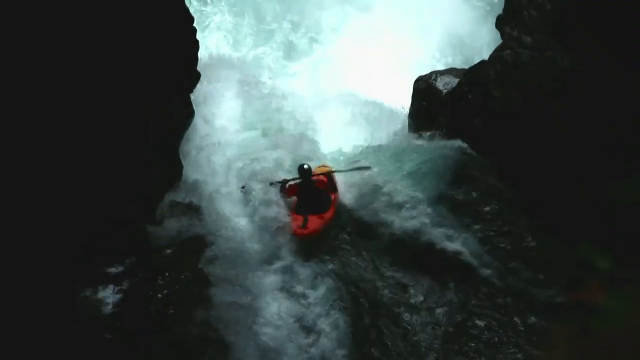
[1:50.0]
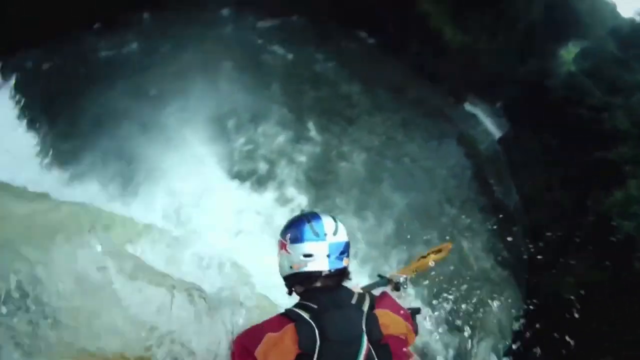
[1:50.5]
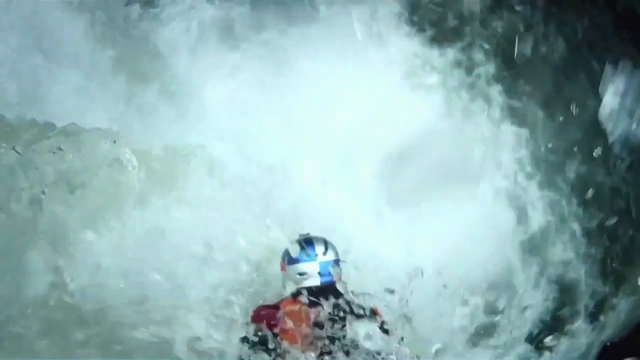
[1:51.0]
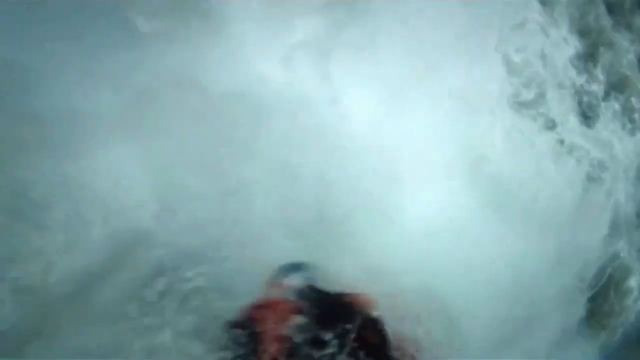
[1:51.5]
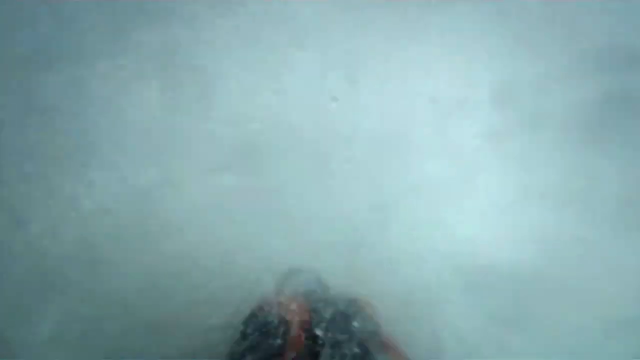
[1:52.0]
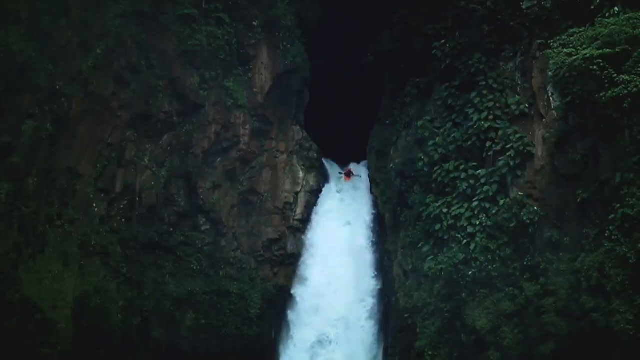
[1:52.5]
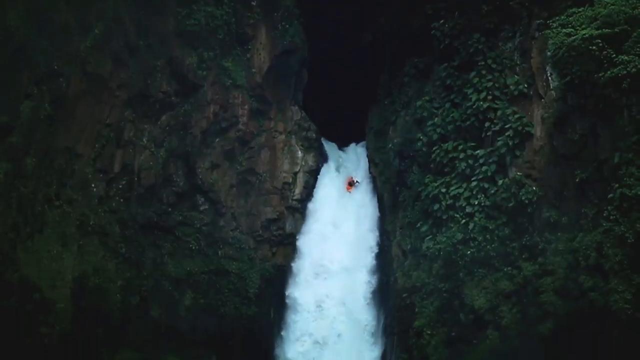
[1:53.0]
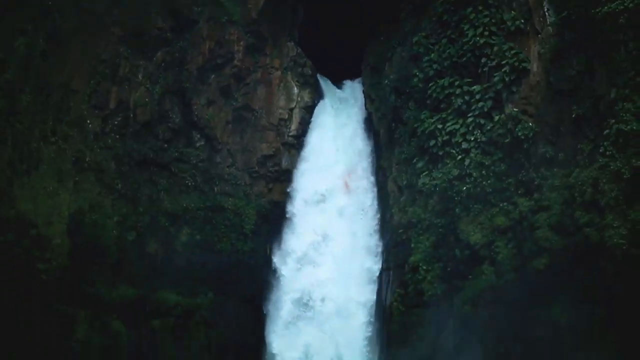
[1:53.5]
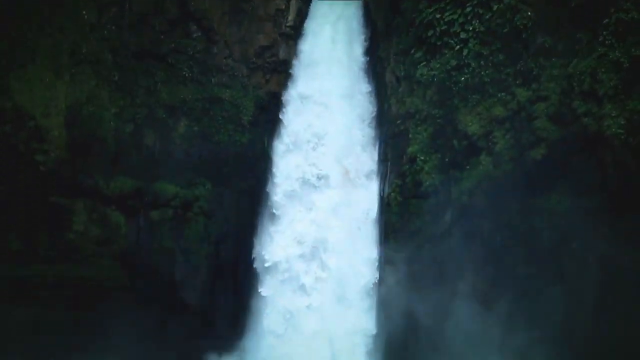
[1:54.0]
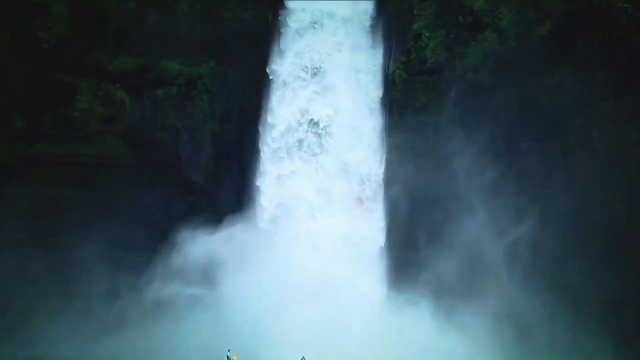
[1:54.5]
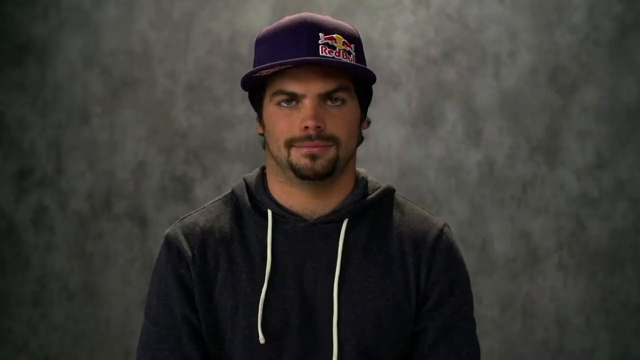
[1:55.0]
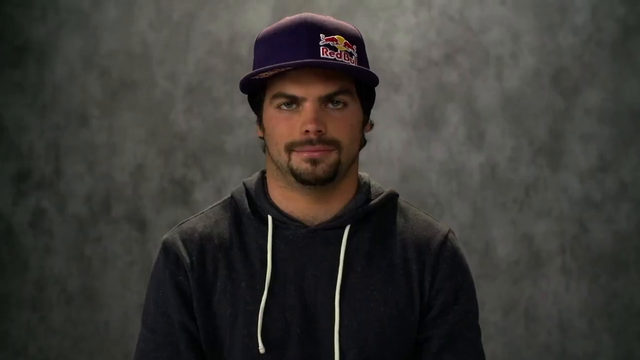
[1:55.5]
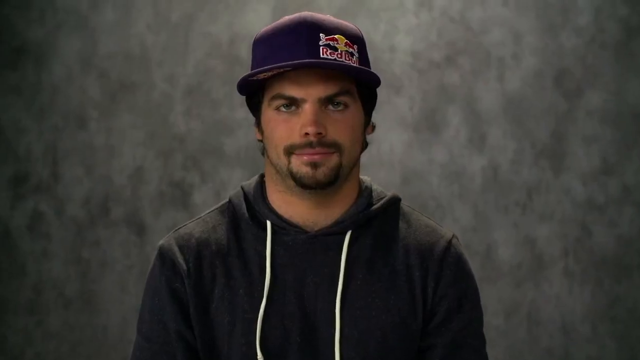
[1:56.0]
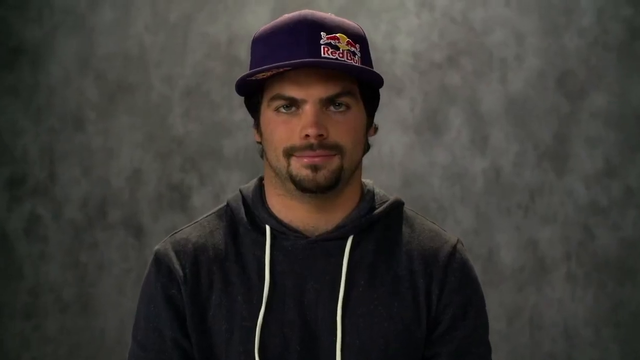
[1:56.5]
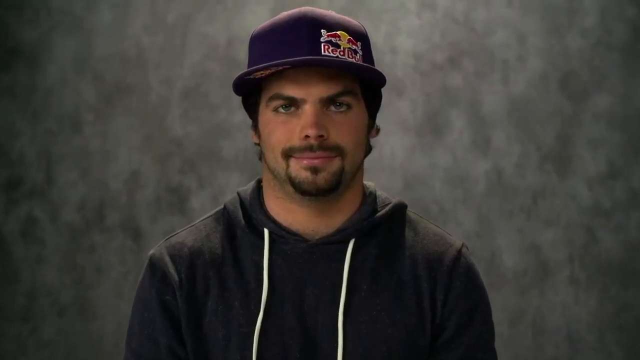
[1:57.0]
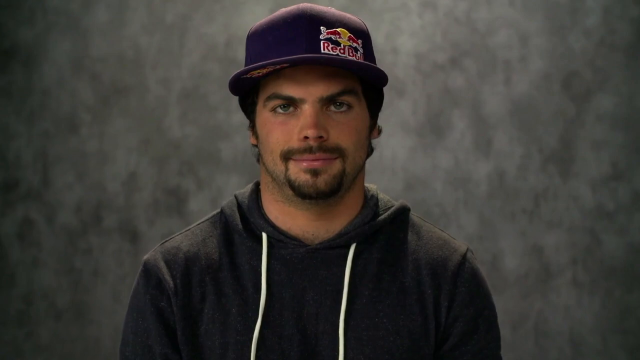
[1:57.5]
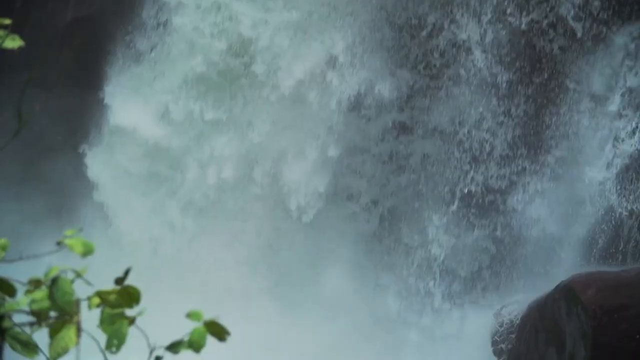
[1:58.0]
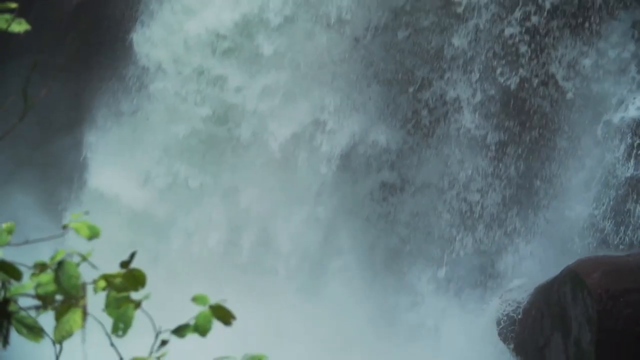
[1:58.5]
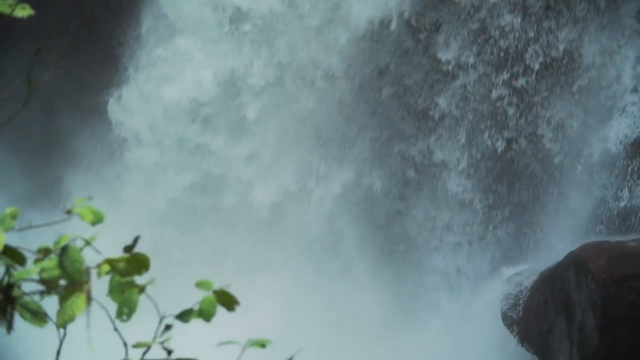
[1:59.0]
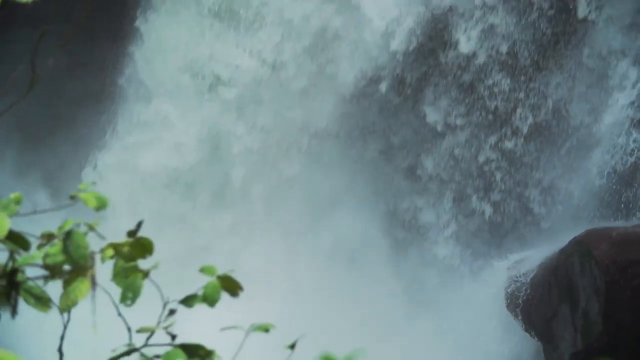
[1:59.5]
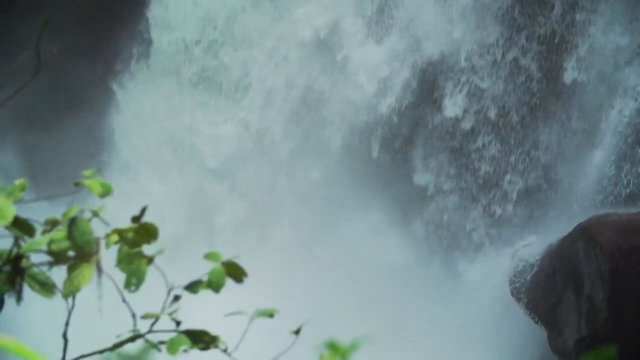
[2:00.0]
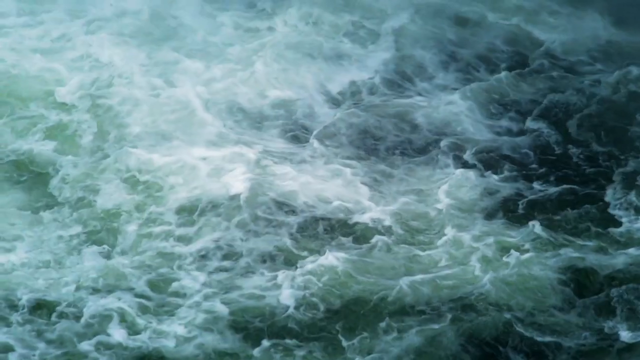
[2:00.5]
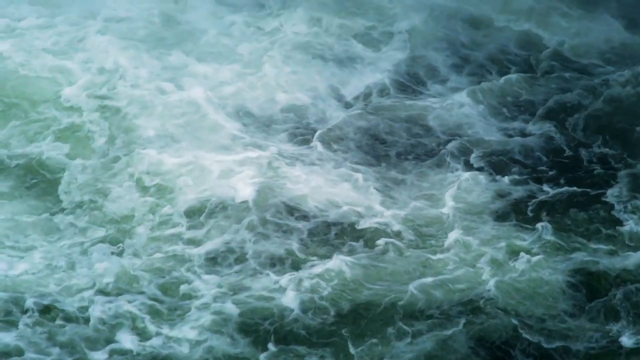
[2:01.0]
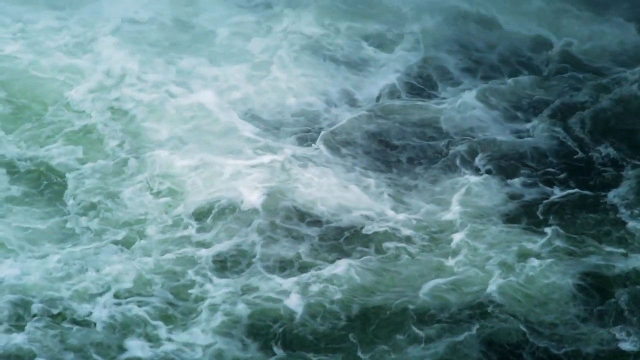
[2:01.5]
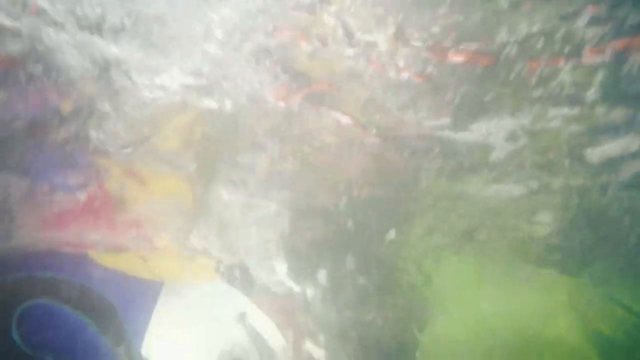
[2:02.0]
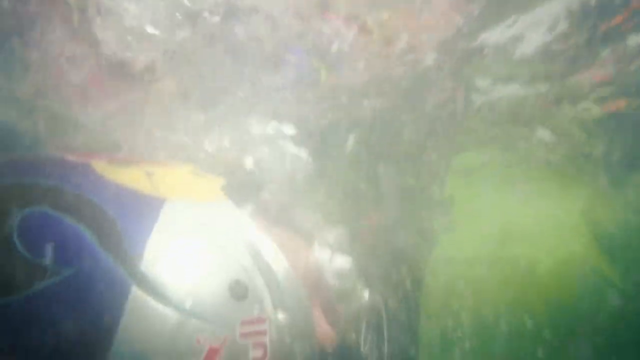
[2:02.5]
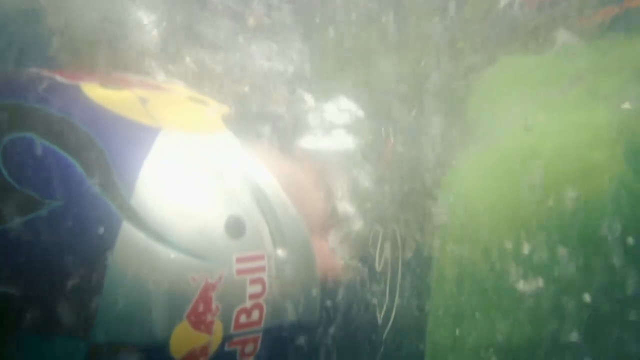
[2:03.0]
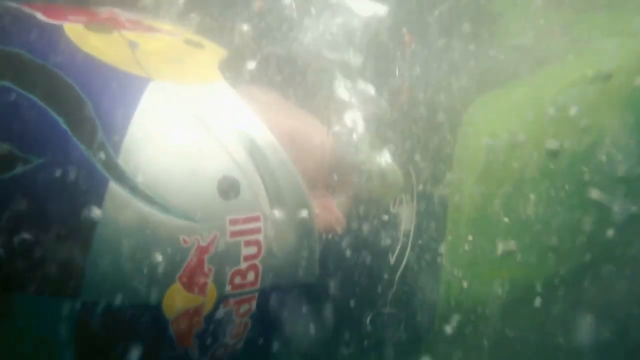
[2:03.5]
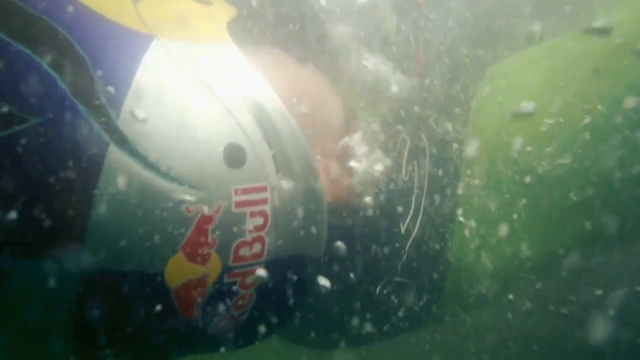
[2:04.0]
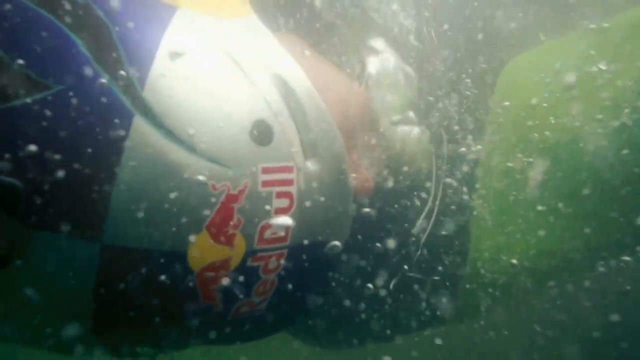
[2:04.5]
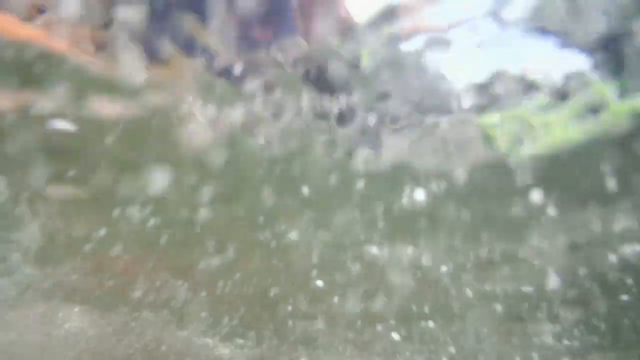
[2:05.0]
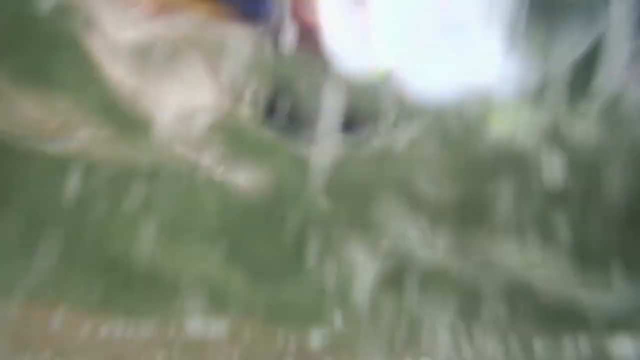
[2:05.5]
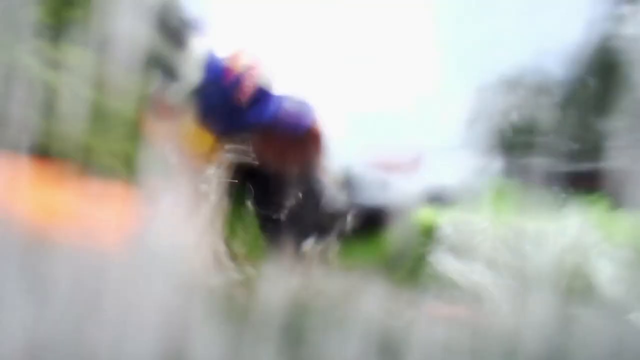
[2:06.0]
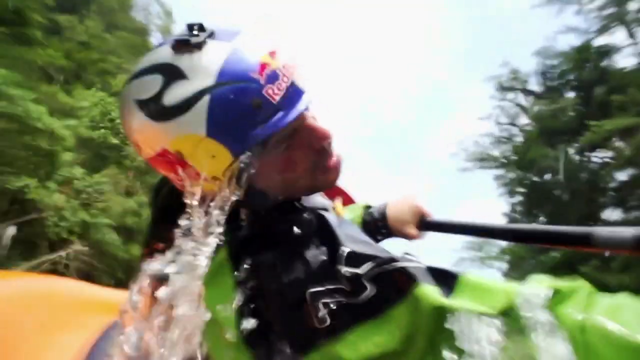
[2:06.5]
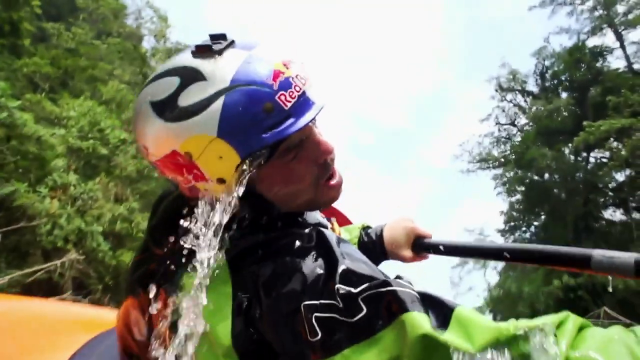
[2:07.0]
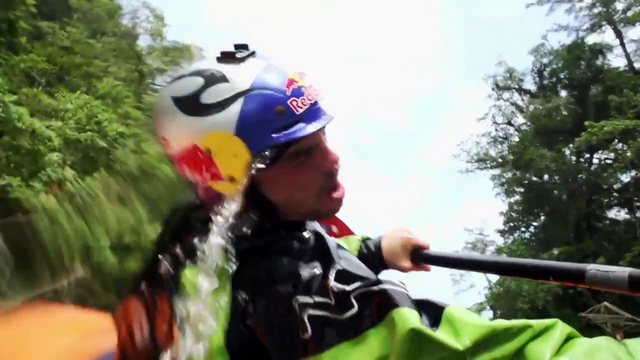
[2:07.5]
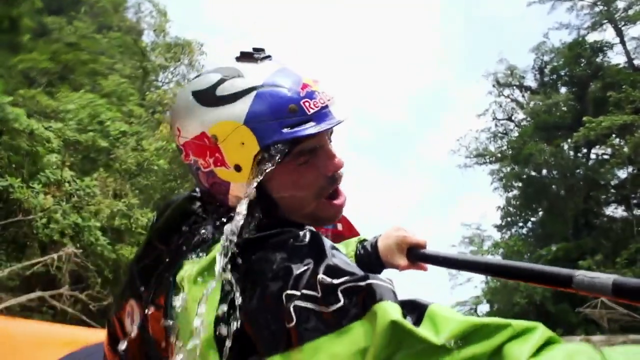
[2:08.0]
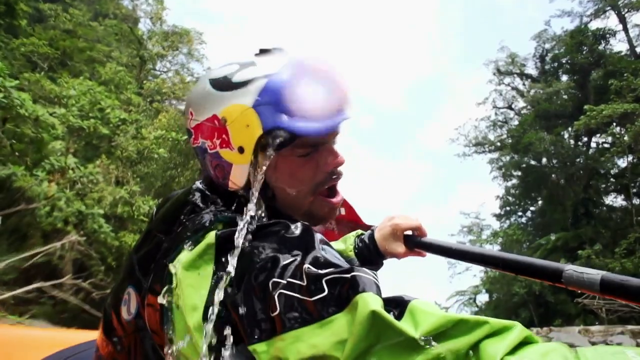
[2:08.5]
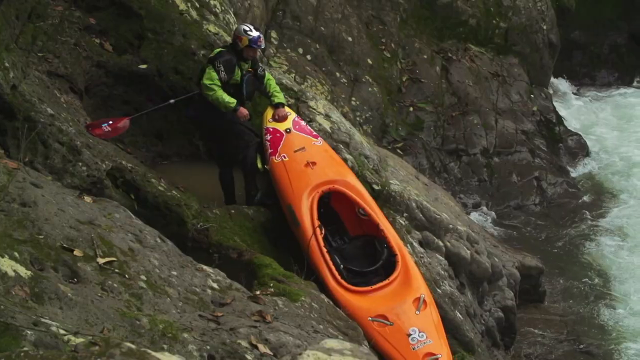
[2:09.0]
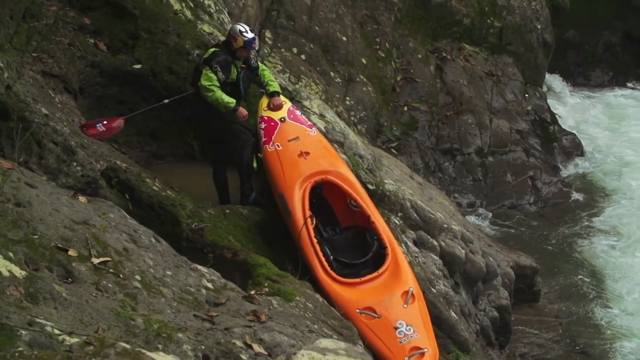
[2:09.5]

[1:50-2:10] Scenes from a kayaking adventure appear to have been filmed for Red Bull, with a Red Bull logo in the bottom right corner. In one scene the kayaker sits looking at the camera wearing a purple hat with a Red Bull logo; the logo is also visible on his kayak and helmet. He tumbles down a waterfall in his kayak into a large pool of water below and completely disappears under the water. A cut to a view almost like it is from his helmet shows him under the water, twisting and trying to get the kayak upright. In the background of the wider shot of his descent, two other people in kayaks are at the bottom, apparently waiting for him. The water in the pool is very clear, while the rest of the river is very white and choppy.